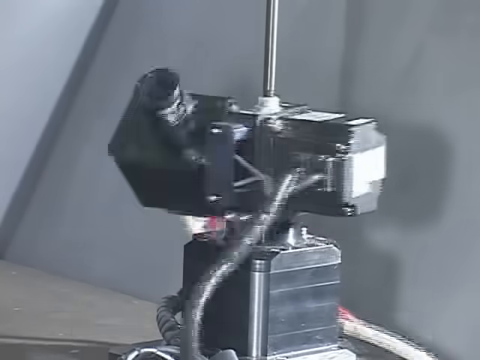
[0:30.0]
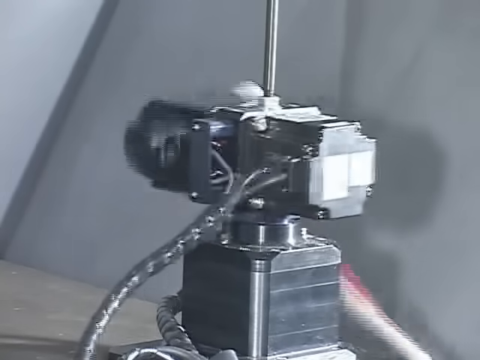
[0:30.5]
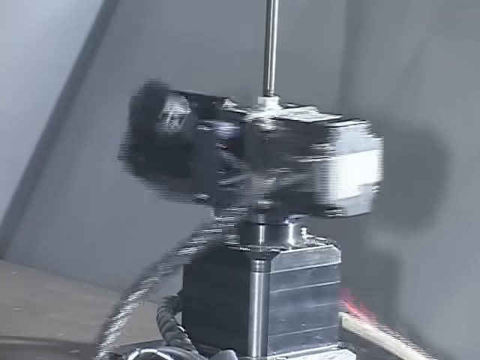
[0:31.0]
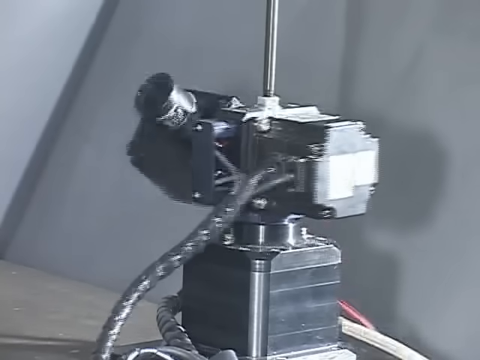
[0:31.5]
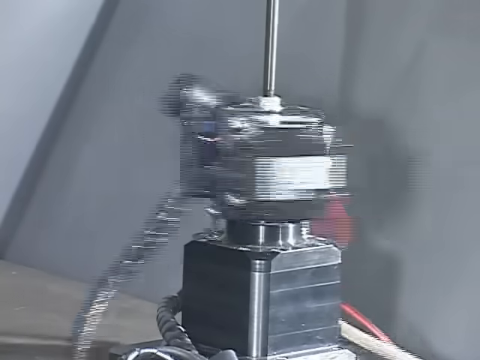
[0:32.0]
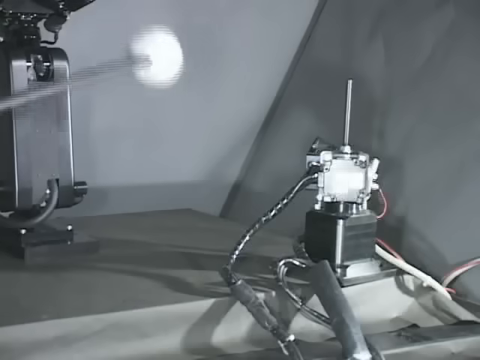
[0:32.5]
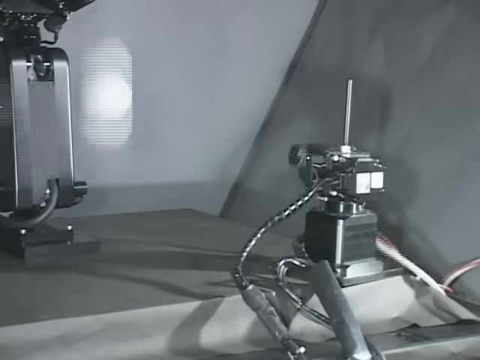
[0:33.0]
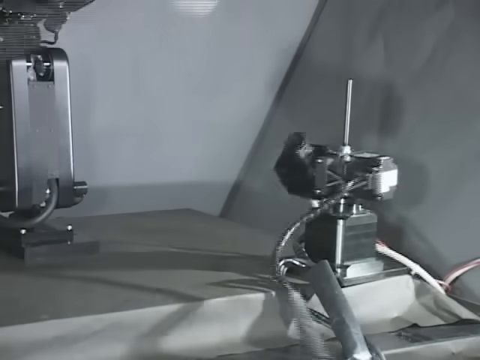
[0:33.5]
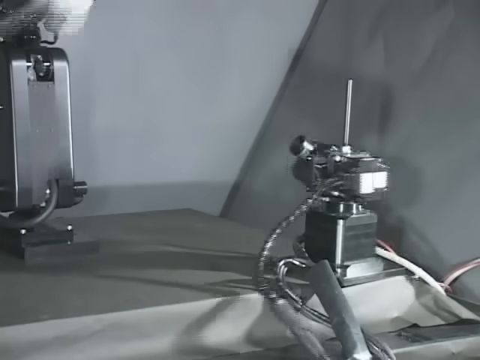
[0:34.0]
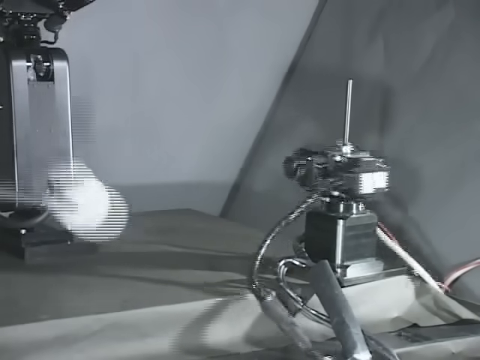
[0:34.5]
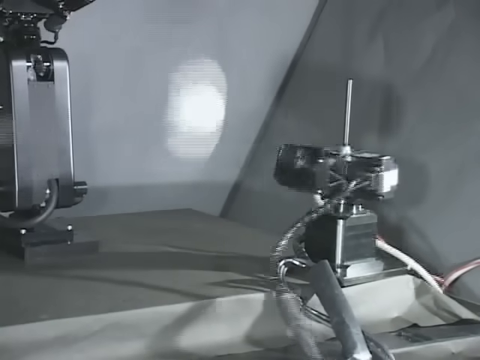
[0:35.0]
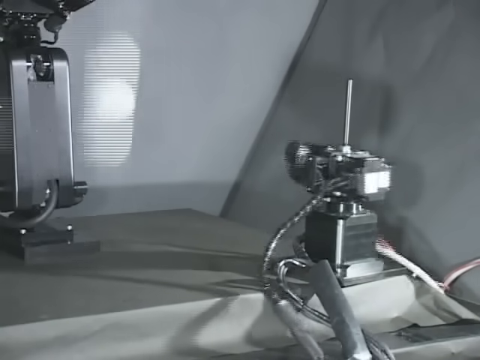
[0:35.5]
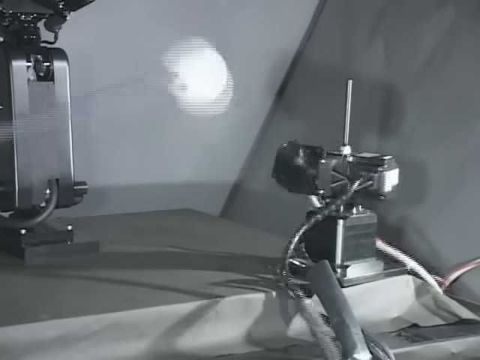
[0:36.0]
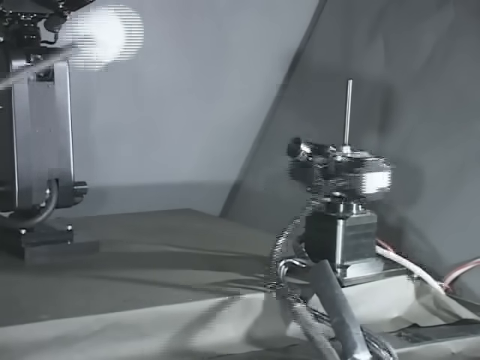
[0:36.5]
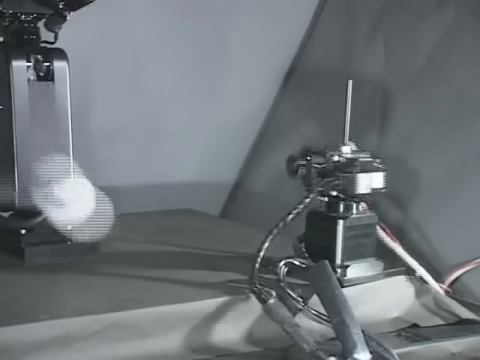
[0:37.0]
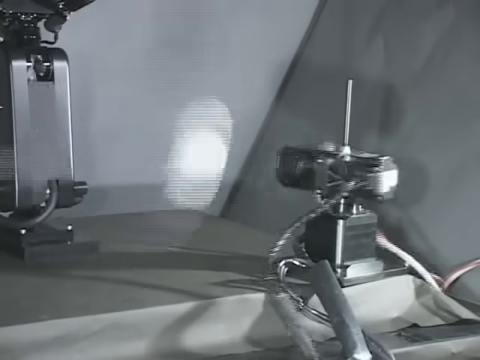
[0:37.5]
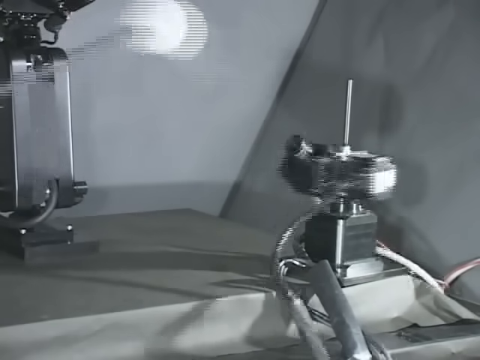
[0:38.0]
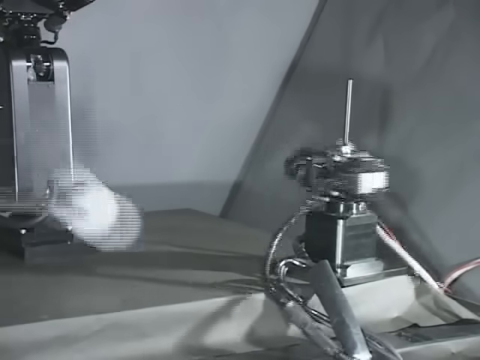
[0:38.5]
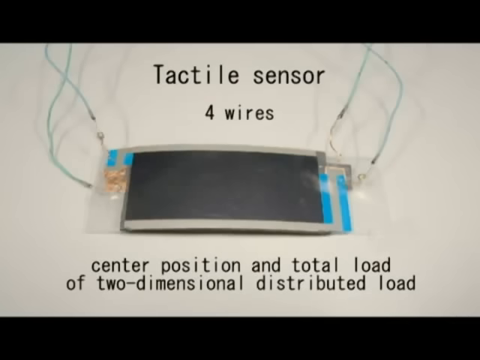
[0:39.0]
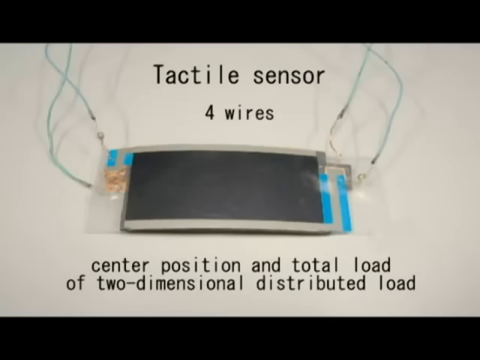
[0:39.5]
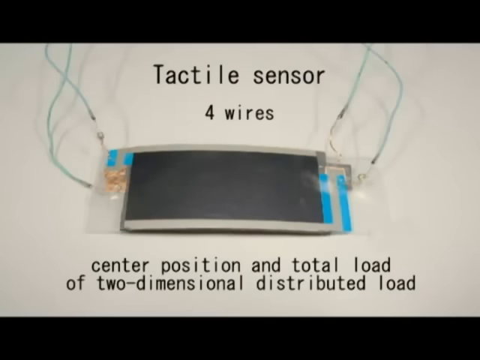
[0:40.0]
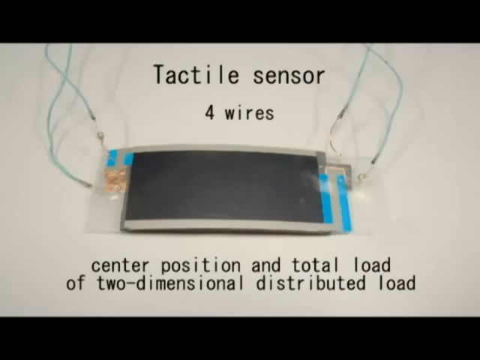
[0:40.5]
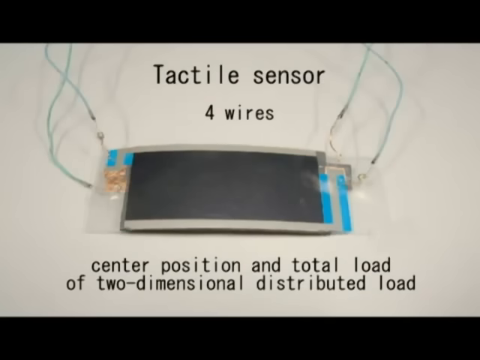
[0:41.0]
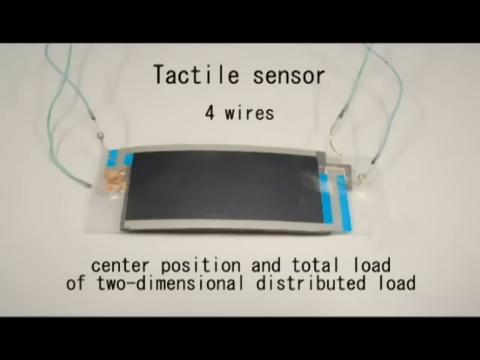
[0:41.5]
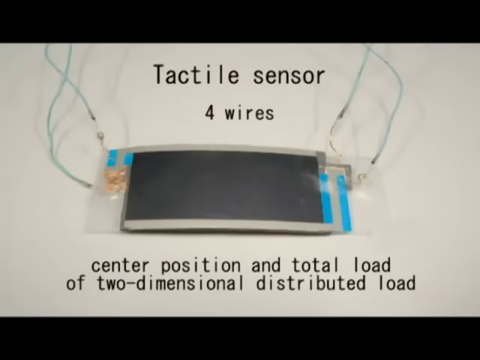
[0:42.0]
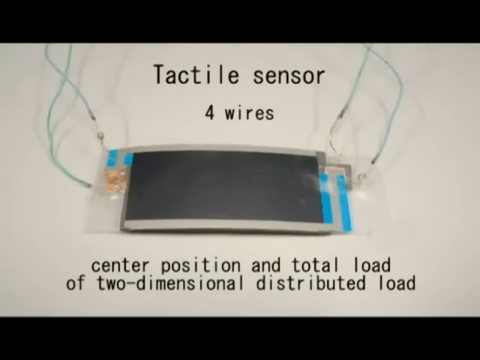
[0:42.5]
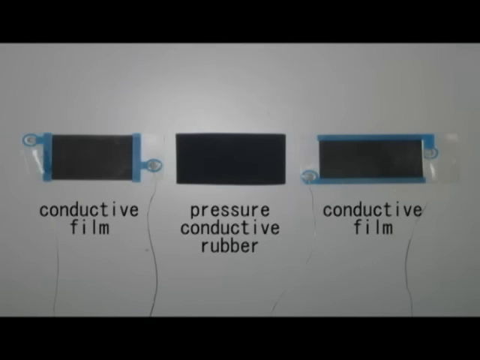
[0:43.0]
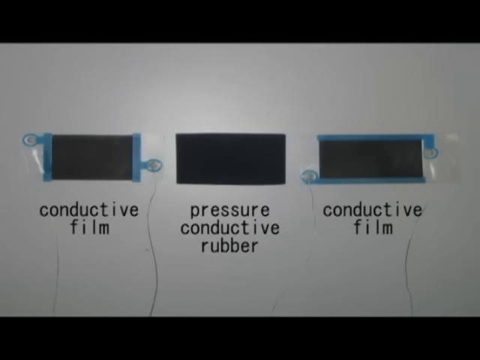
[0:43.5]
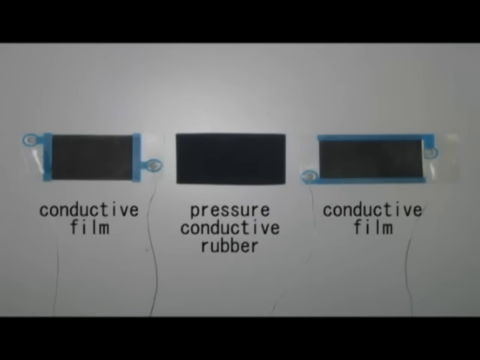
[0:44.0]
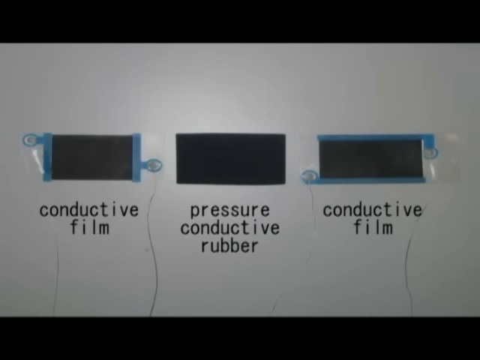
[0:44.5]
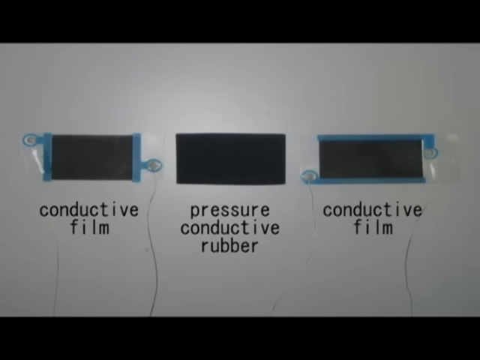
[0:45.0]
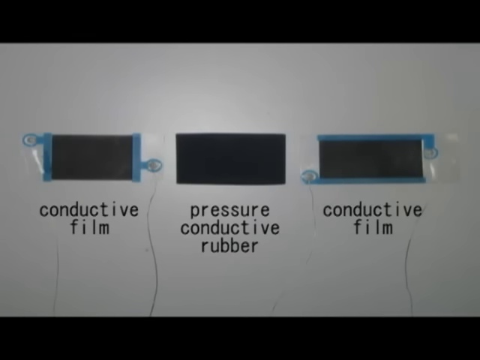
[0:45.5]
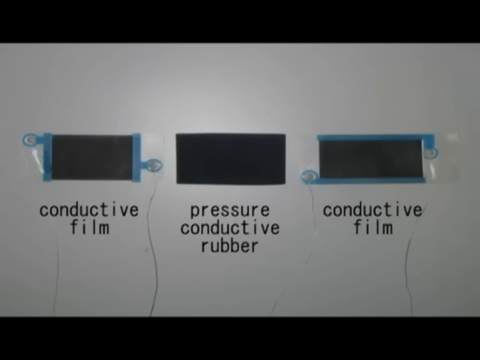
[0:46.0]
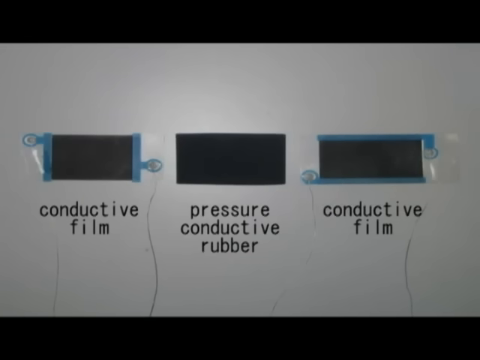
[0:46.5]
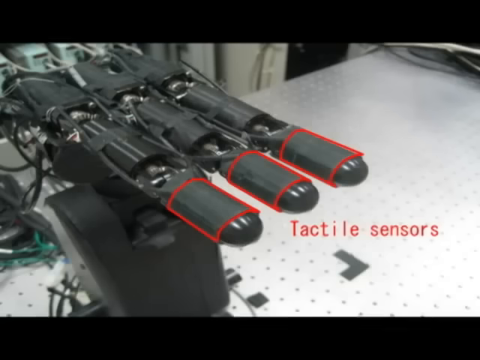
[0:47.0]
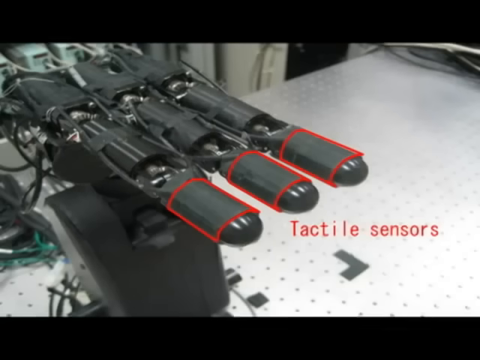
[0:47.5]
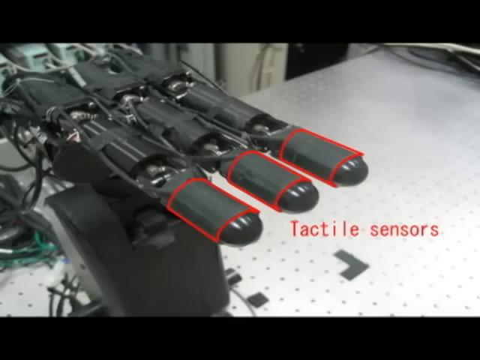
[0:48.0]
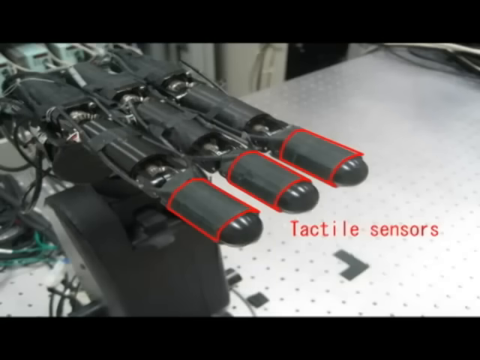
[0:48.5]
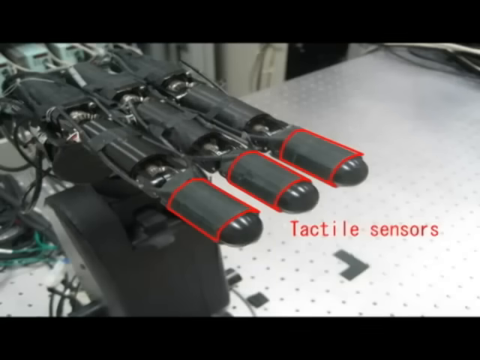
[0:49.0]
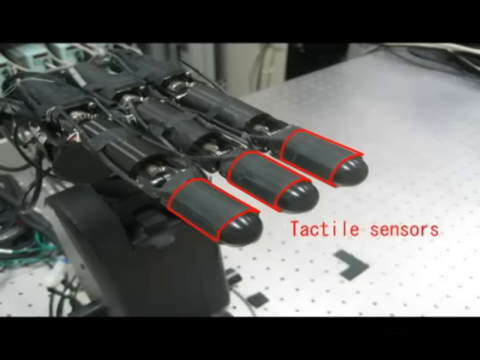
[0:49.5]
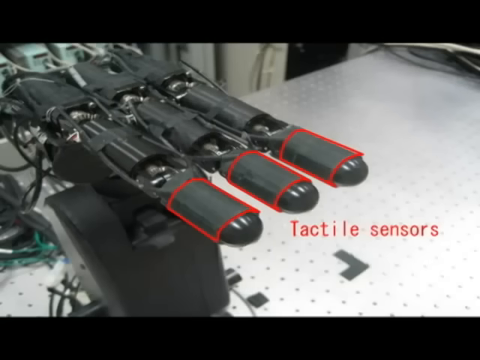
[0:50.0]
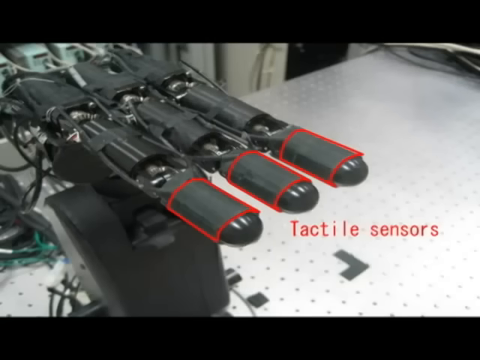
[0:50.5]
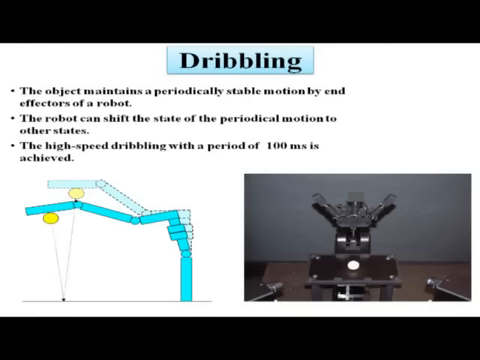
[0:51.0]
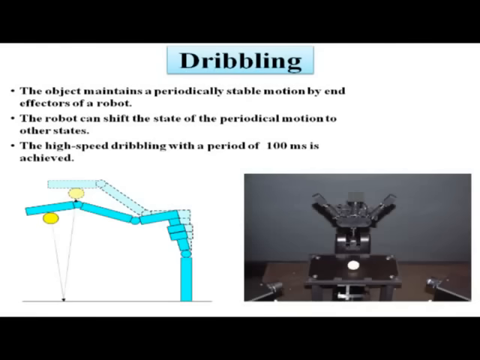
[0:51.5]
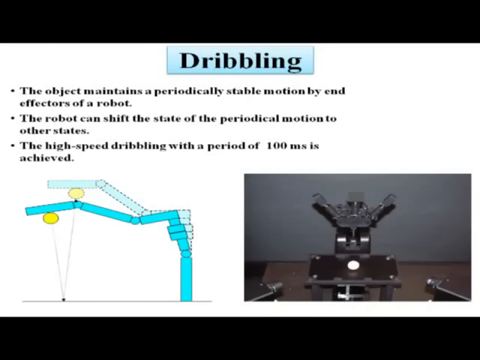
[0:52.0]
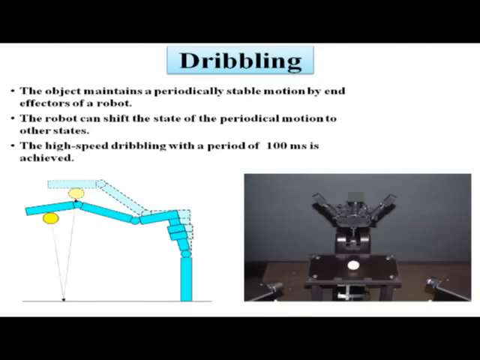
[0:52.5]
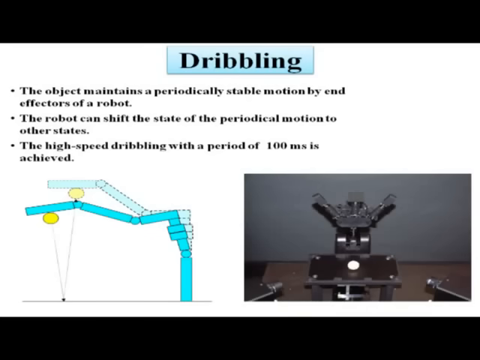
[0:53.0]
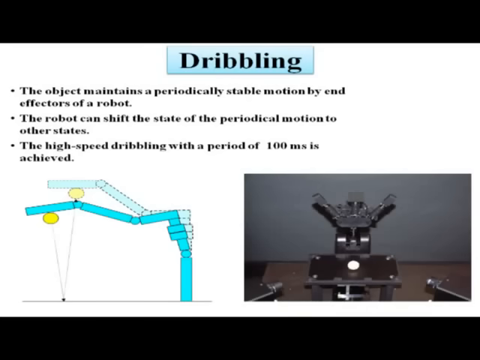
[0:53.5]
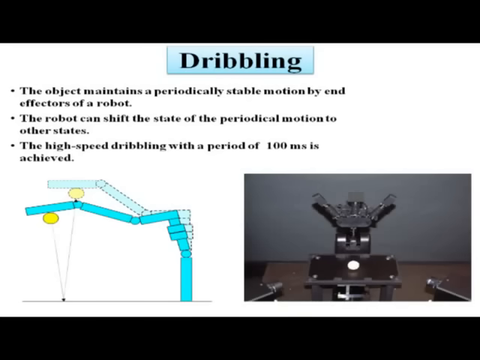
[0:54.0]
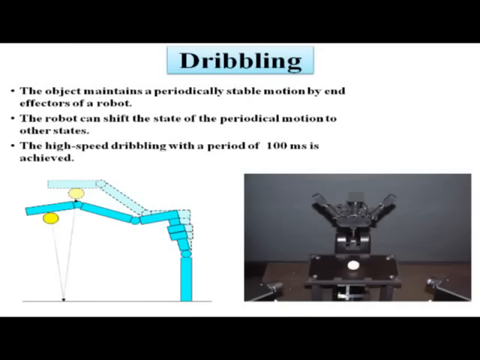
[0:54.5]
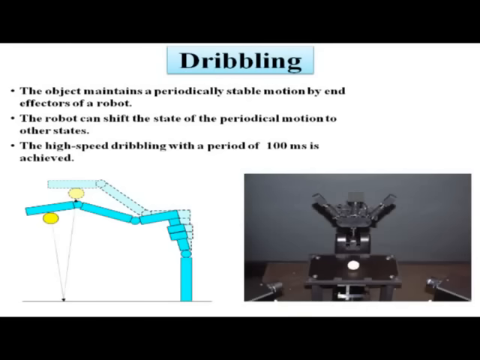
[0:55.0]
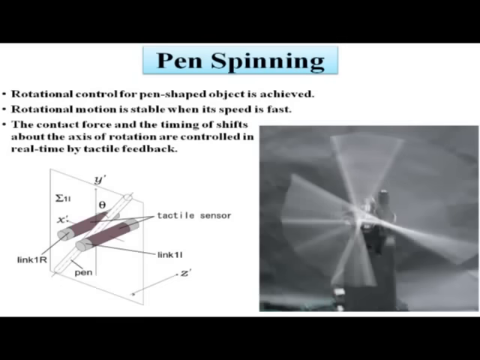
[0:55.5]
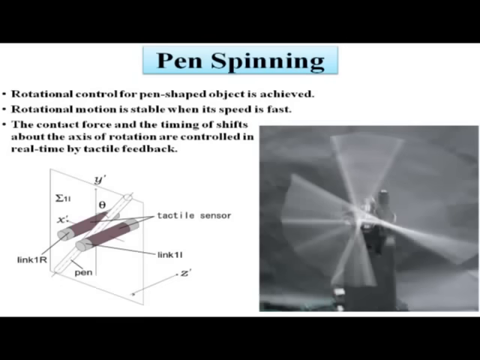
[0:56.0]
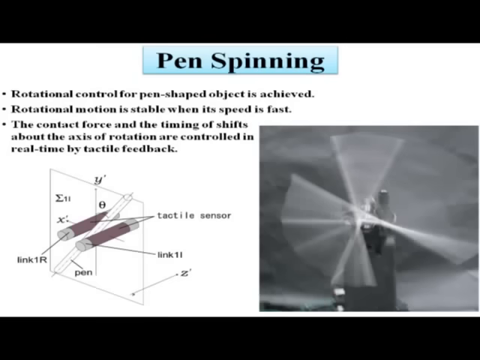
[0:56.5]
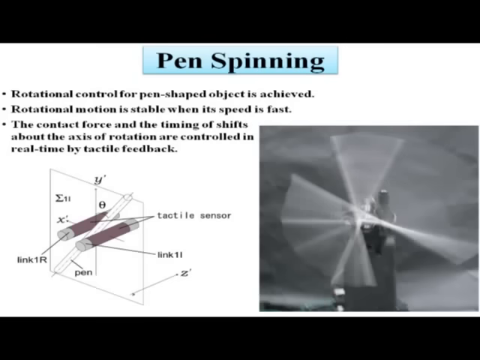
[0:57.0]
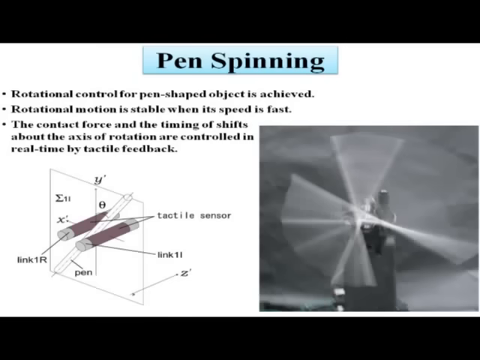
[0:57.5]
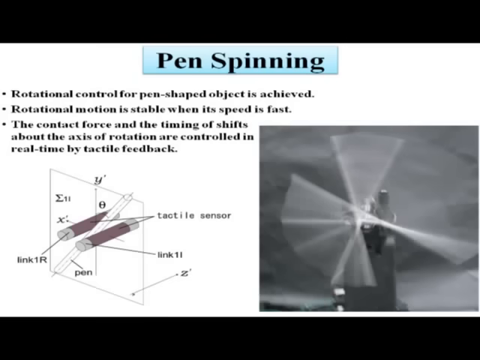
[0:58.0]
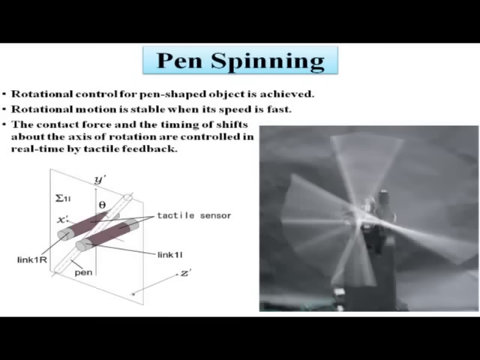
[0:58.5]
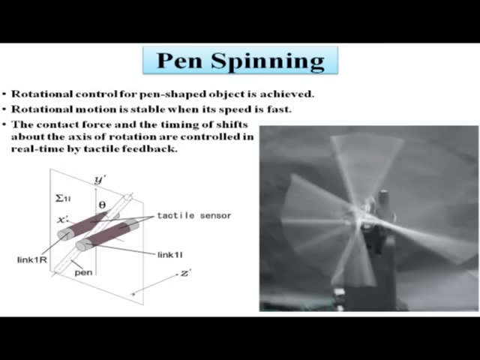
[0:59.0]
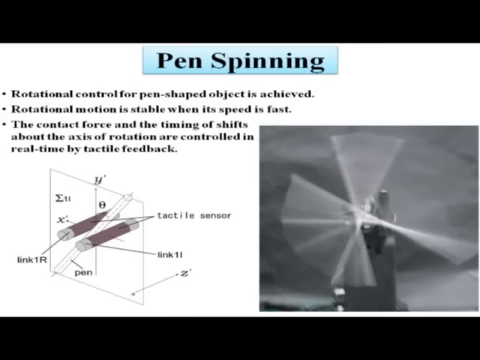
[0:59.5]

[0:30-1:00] The robot with the camera on its left side appears to be looking at an object and moving as quickly as possible to track it. Cords come from the front of its right side and to the back of the left side where the camera is, and it is propped up on a vertical metal dowel-style rod. The scene zooms out to what looks to be another robot or a person moving around a white ball with a rod connected to it. As the ball moves, the camera on the robot watches to figure out where the ball is, moving just as fast as the ball and keeping up with the task. The next scene shows what looks to be a chip of some sort, kind of a computer chip, with the image of the chip in the center, the text "tactile sensor for wires" in black lettering at the top, and the text "center position and total load of two-dimensional distributed load" in black lettering at the bottom. Another image shows what are possibly different films: two conductive films on the left and right sides and a pressure conductive rubber in the middle, which looks all black compared to the films on either side. It then shows where on the robot these tactile sensors are, using a red outline highlight on the robot. Two PowerPoint slides about dribbling and pin-spinning follow, each kind of showing a still shot on the right and a diagram on the left with some text giving more information.